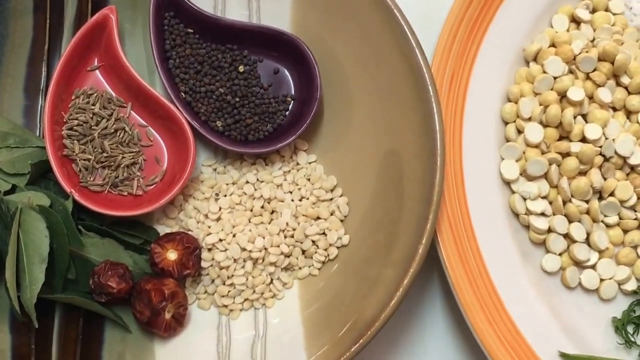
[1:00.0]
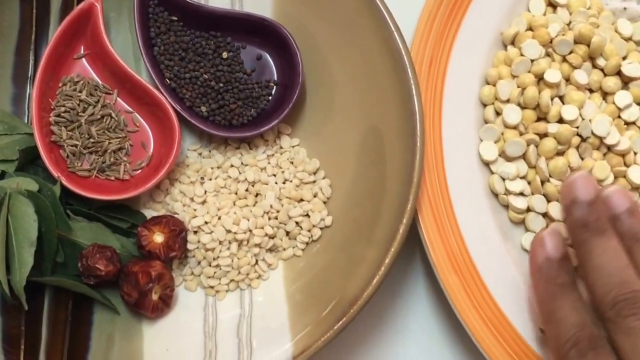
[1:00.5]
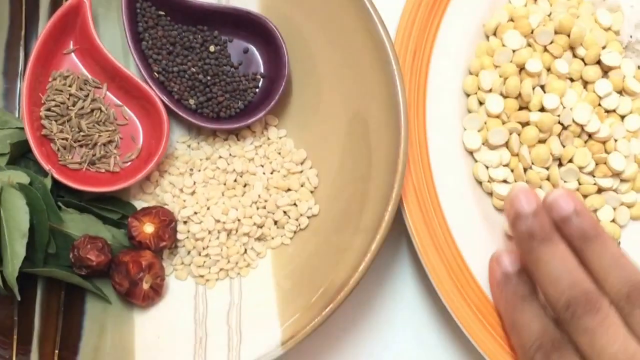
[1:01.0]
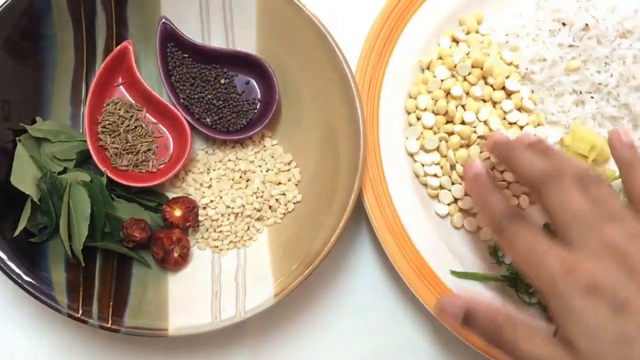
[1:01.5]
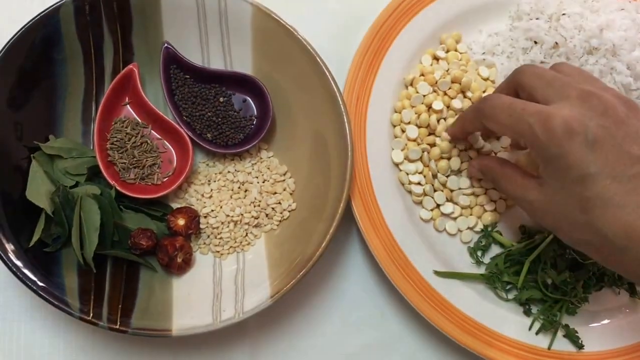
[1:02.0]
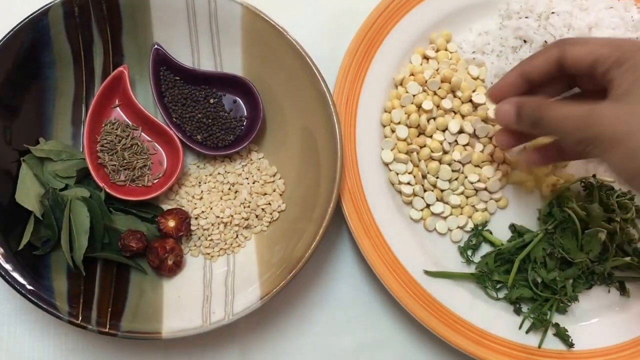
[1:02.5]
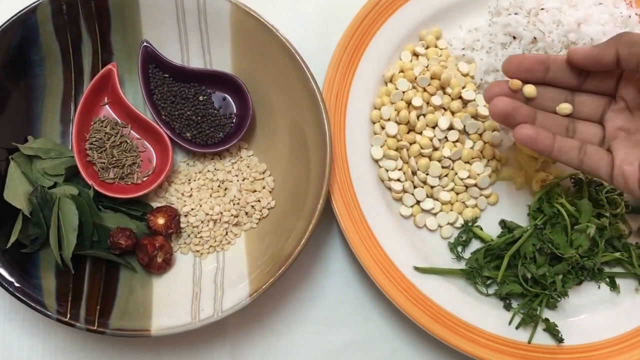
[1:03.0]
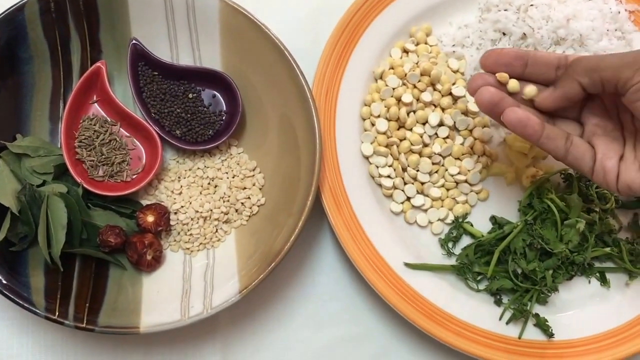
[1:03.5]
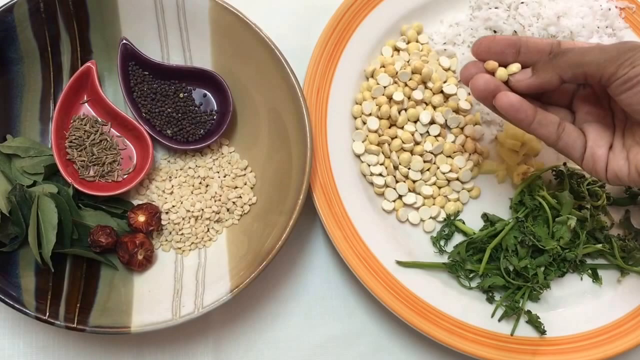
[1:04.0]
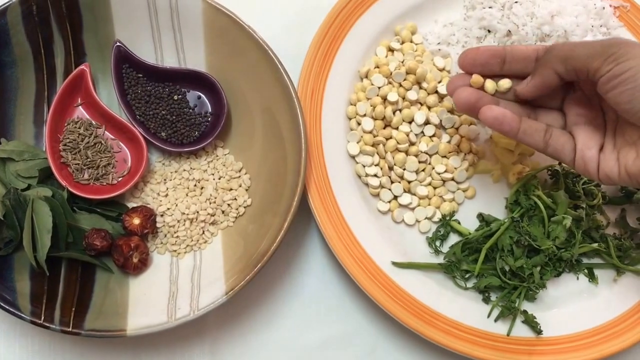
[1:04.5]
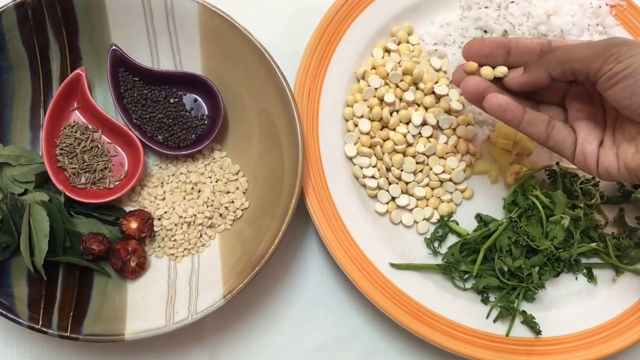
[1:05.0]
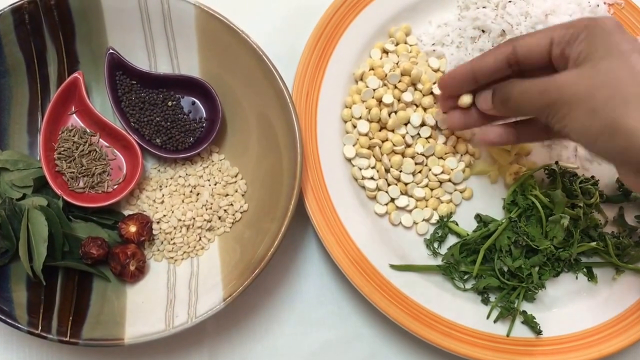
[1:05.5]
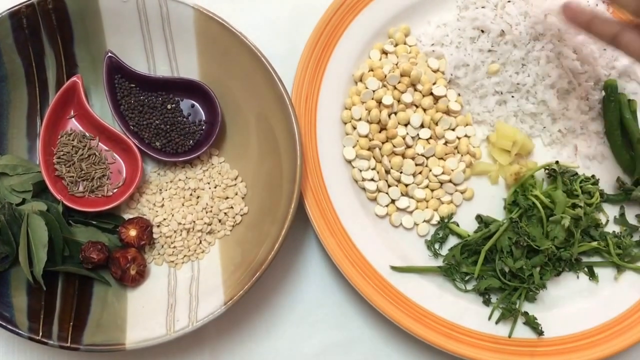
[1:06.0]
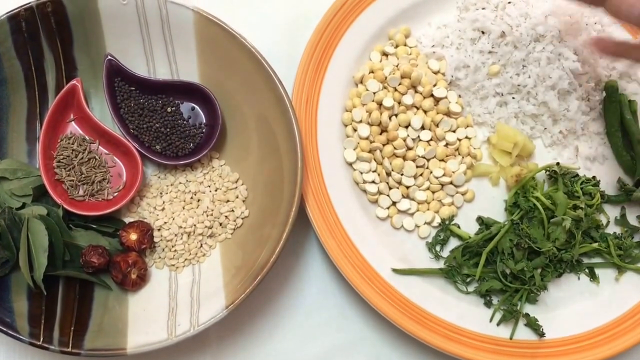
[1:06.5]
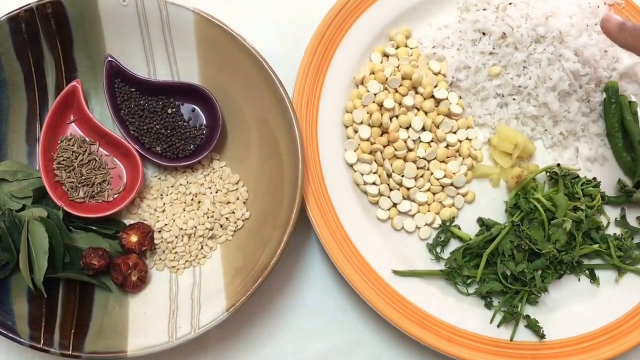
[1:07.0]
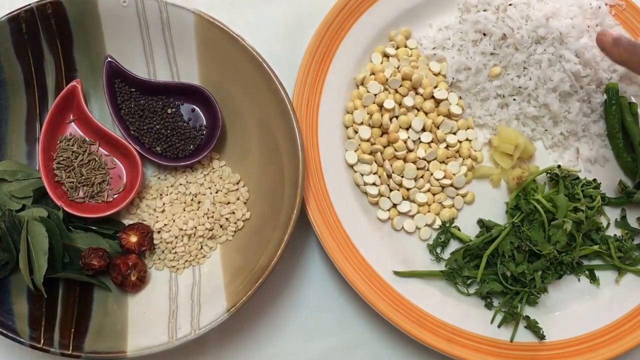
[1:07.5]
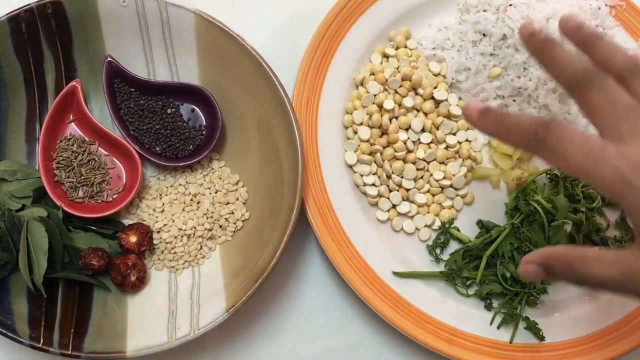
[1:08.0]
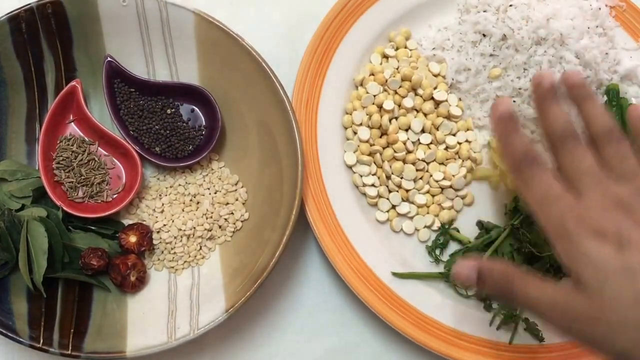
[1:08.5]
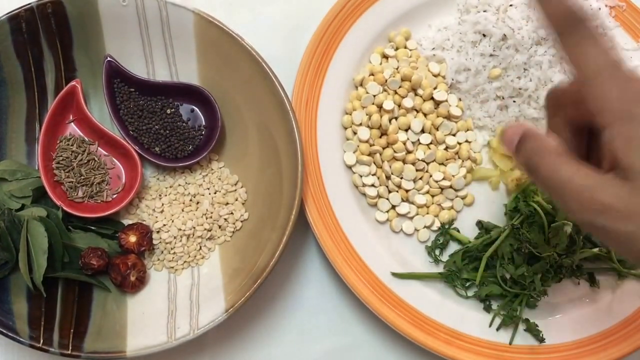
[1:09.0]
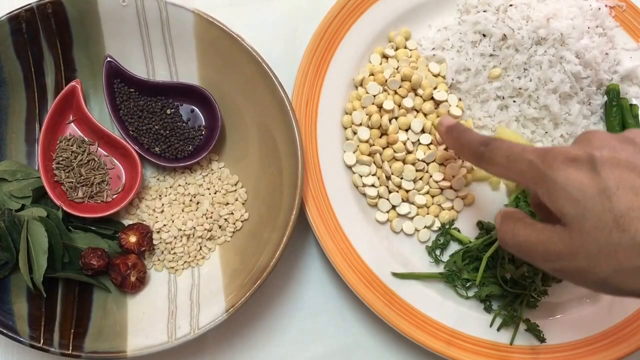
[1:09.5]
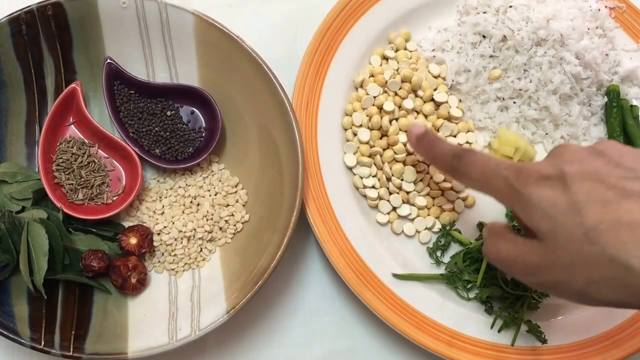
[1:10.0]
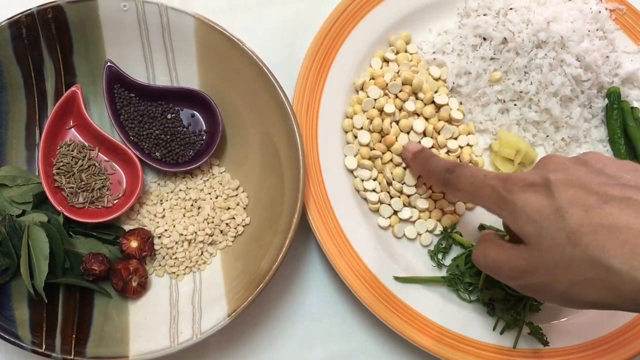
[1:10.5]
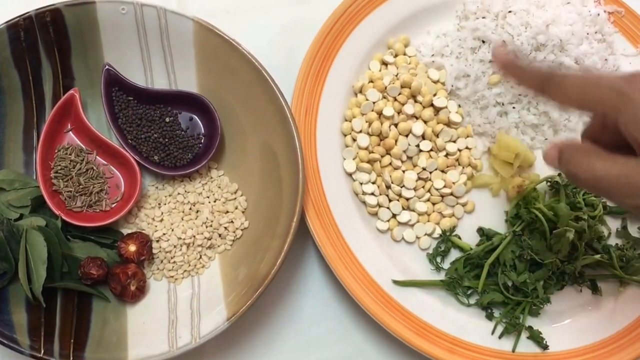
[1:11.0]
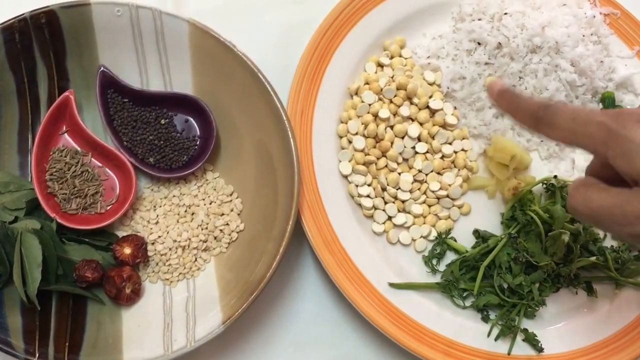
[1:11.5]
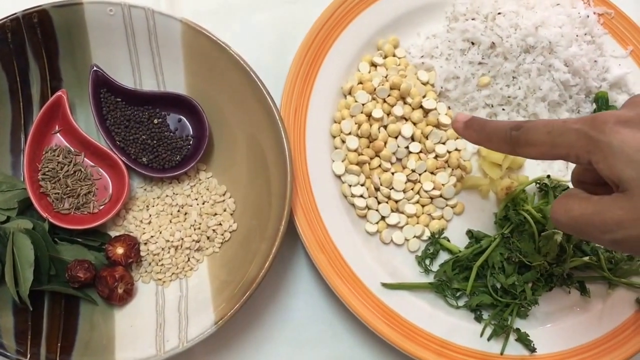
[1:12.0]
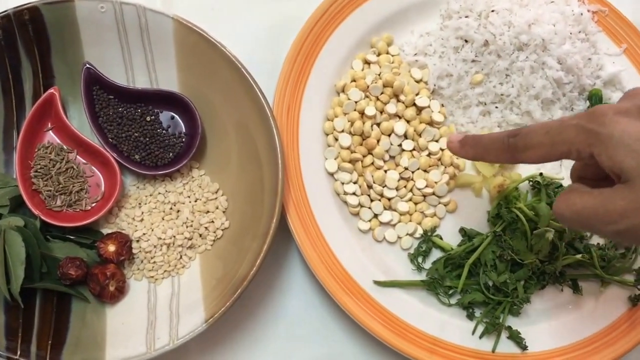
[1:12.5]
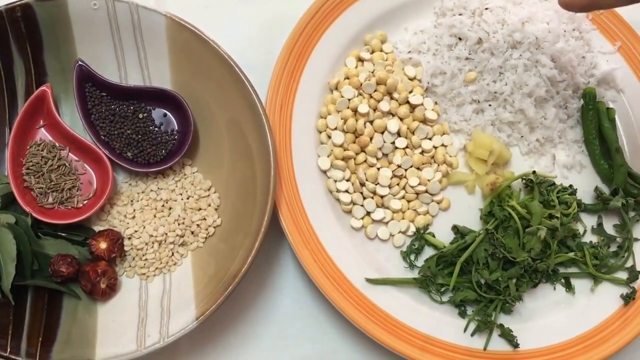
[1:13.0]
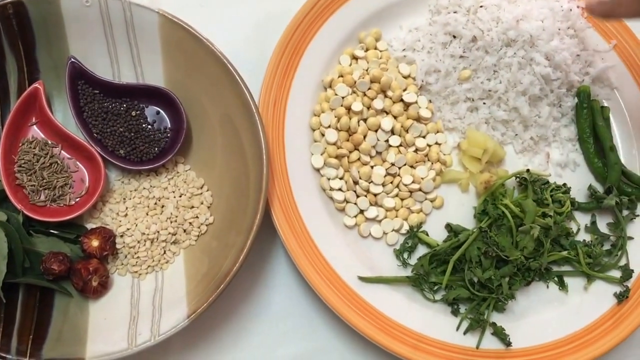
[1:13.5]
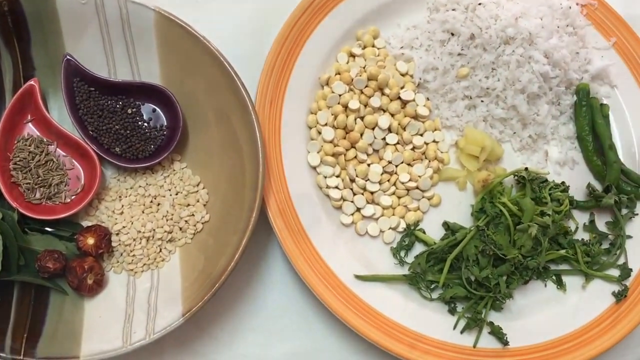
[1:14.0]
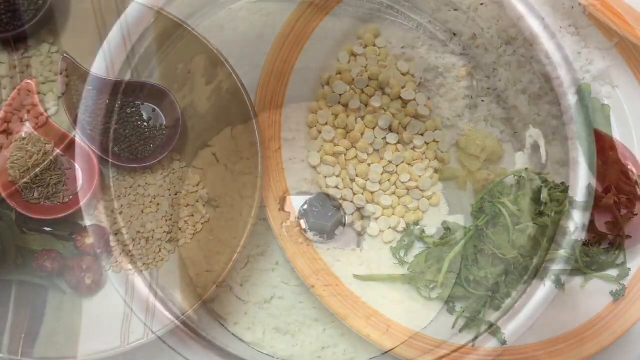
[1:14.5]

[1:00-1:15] The ingredients for a coriander chutney or a curry leaf chutney are spread between two separate plates. There are black peppercorns, what appear to be dried lentils, shredded coconut, and some sort of leaf on the left-hand plate that may be the curry leaf. There also looks to be some cilantro, and in the very center of the right-hand plate, maybe some ginger. A pot appears for just a moment, and it almost looks as if it has flour in it.